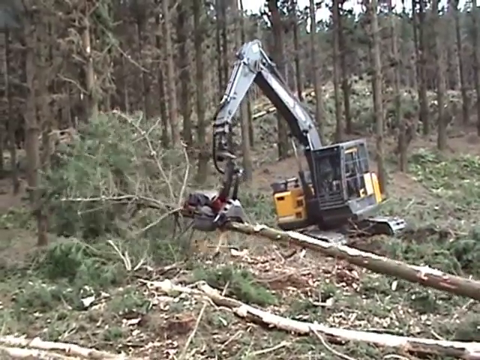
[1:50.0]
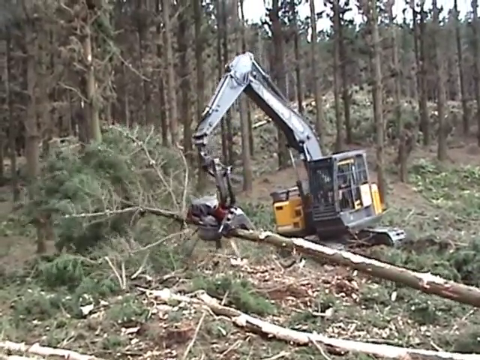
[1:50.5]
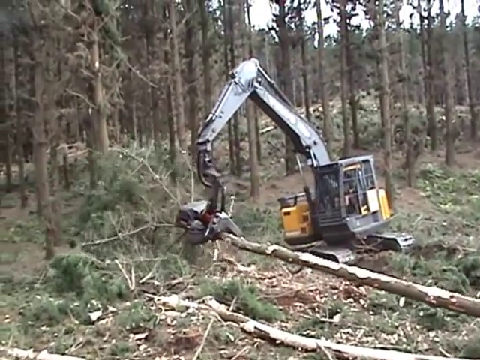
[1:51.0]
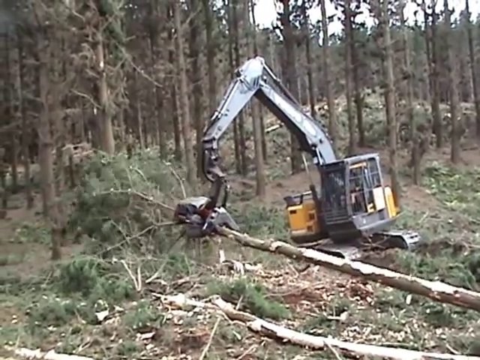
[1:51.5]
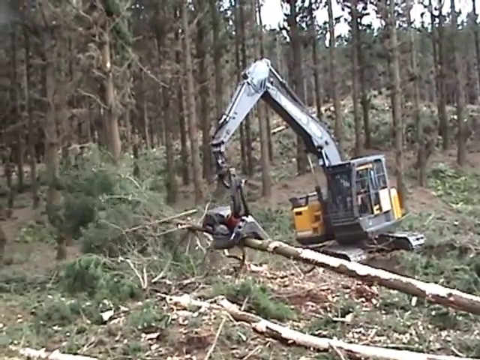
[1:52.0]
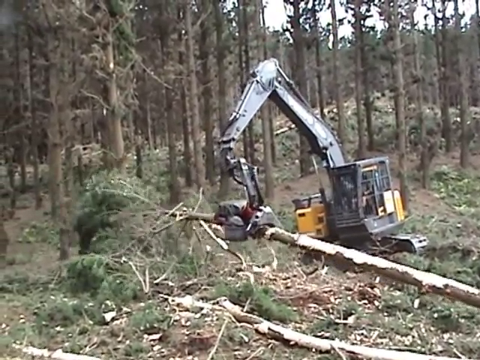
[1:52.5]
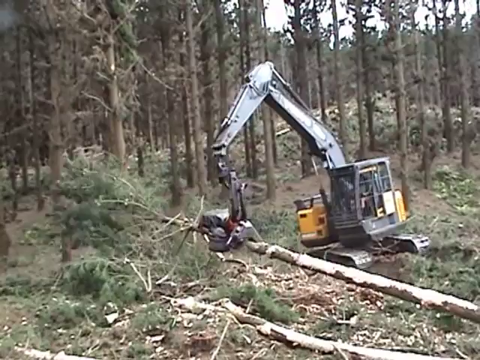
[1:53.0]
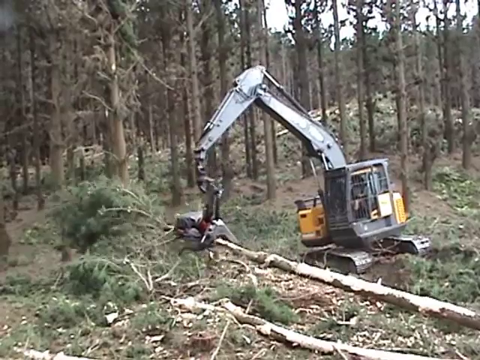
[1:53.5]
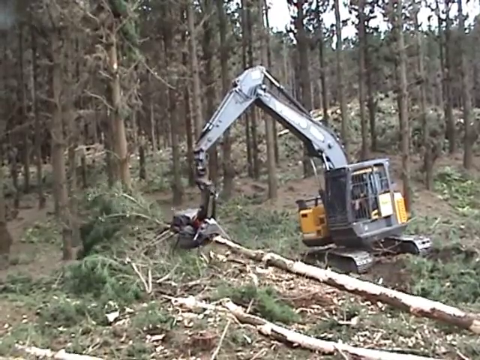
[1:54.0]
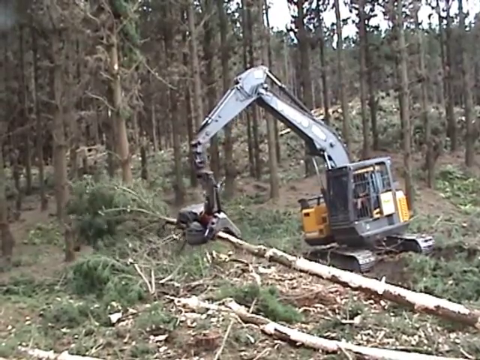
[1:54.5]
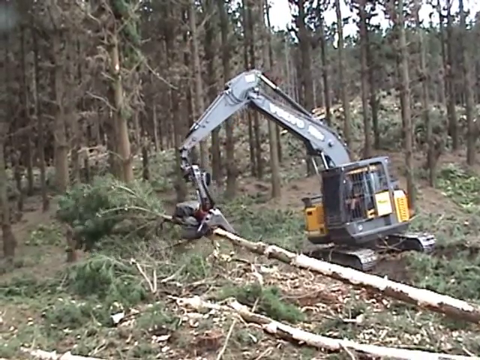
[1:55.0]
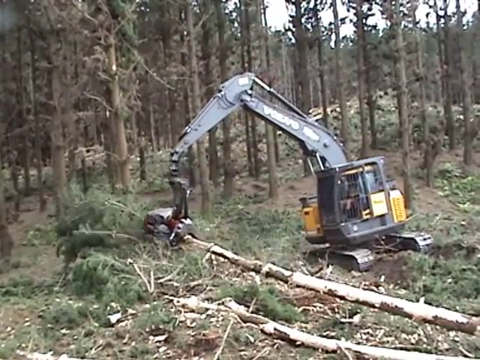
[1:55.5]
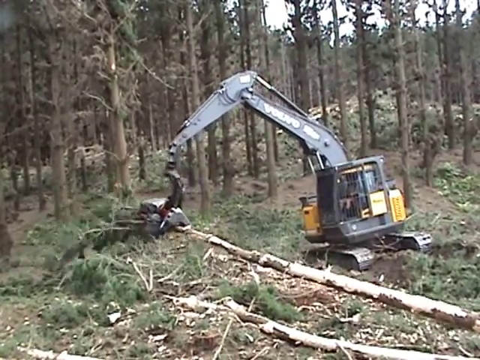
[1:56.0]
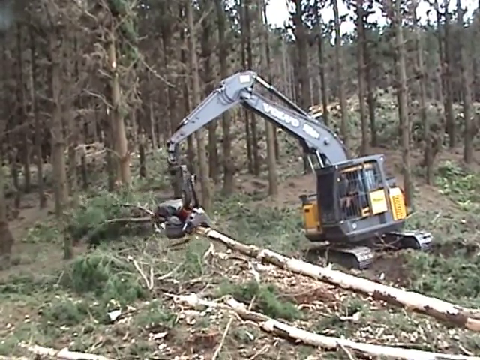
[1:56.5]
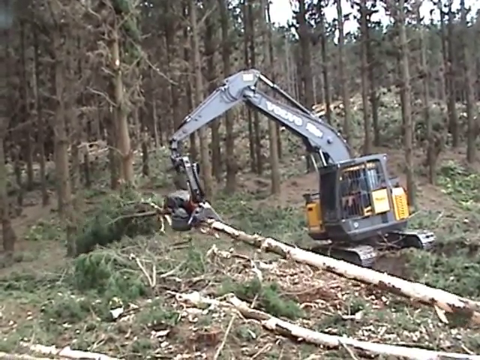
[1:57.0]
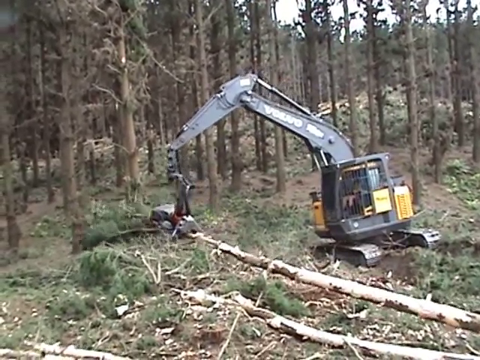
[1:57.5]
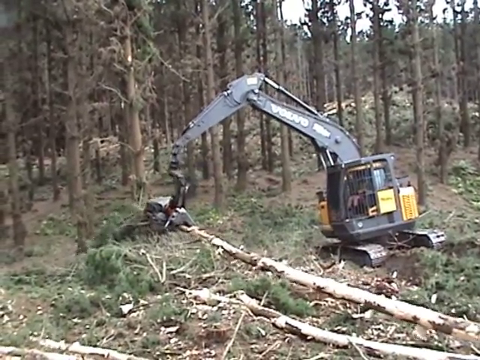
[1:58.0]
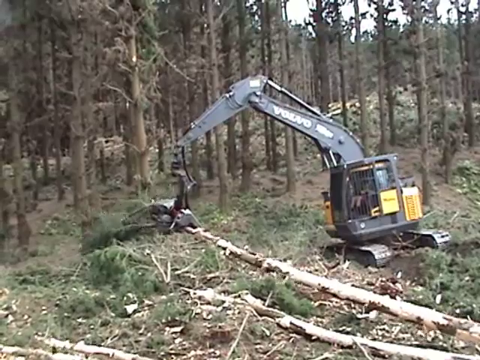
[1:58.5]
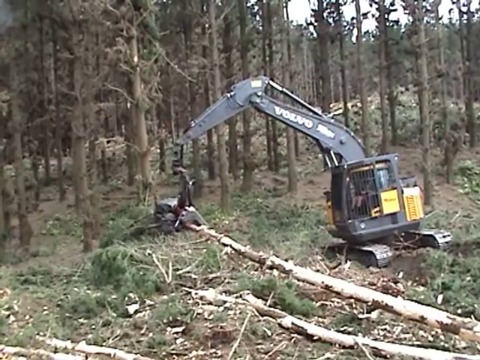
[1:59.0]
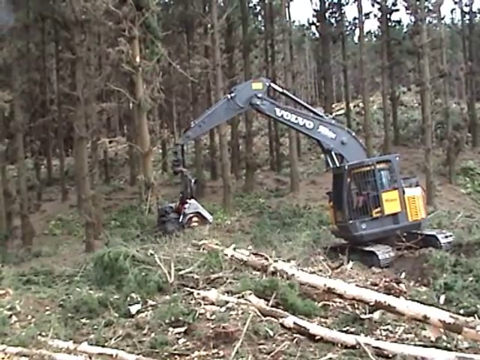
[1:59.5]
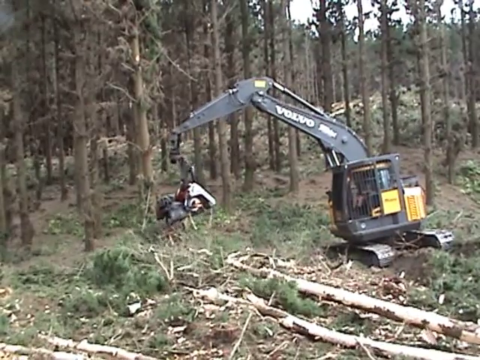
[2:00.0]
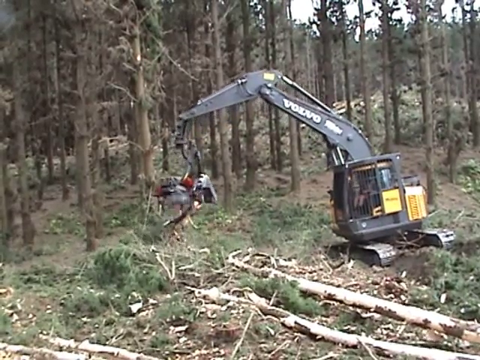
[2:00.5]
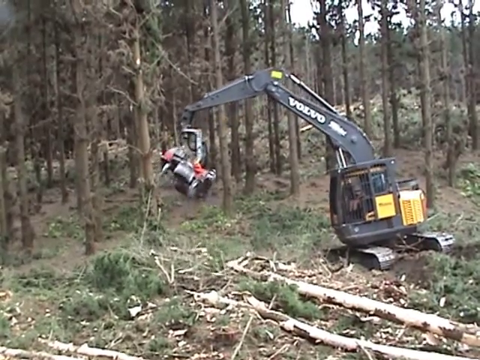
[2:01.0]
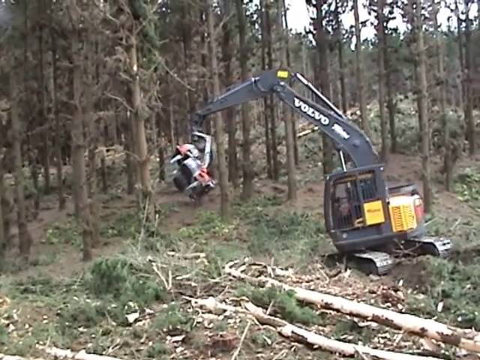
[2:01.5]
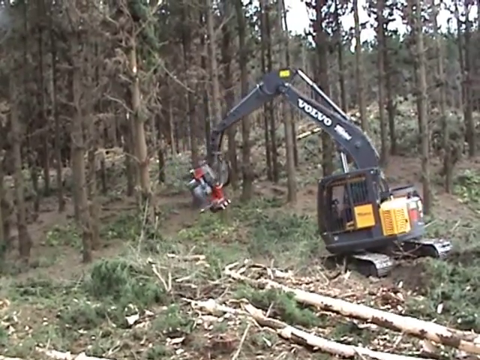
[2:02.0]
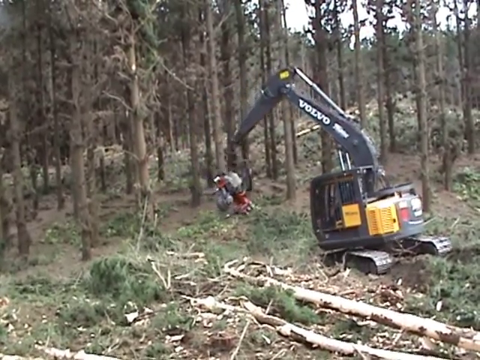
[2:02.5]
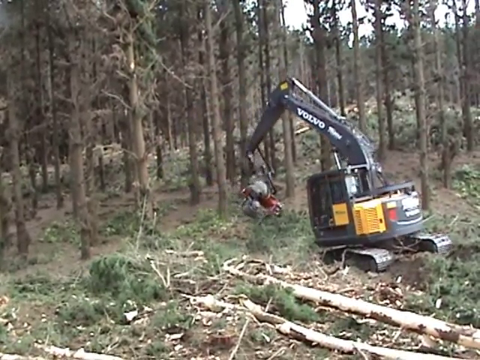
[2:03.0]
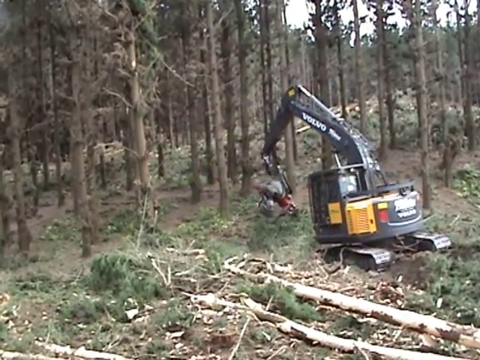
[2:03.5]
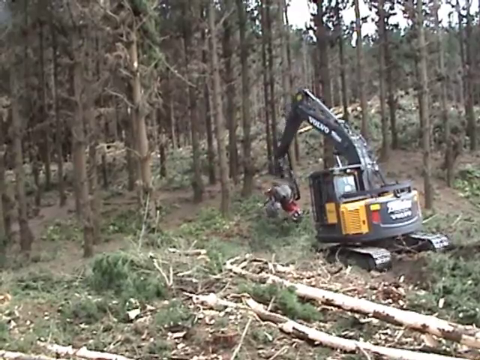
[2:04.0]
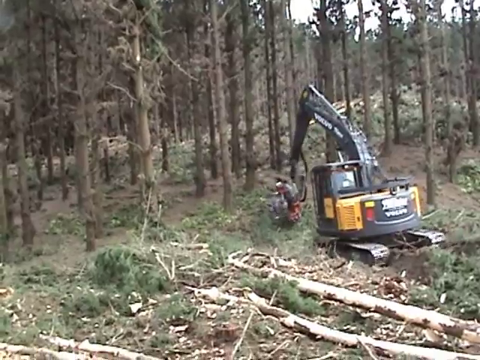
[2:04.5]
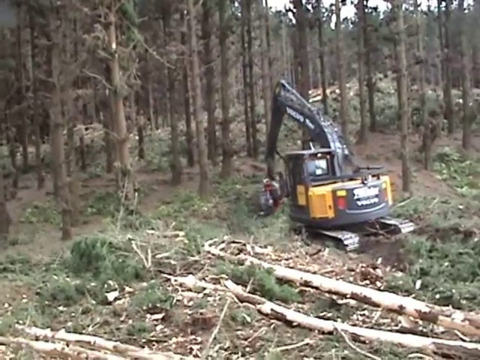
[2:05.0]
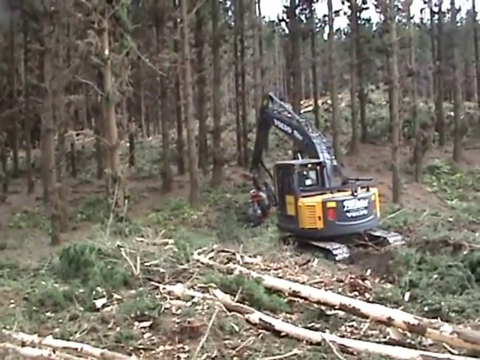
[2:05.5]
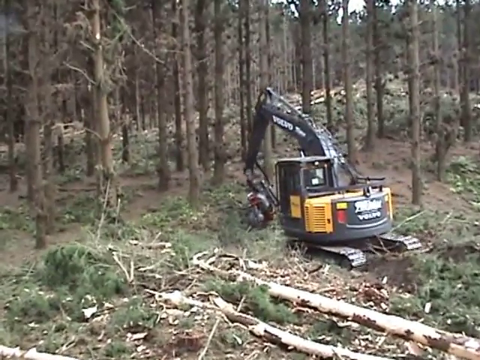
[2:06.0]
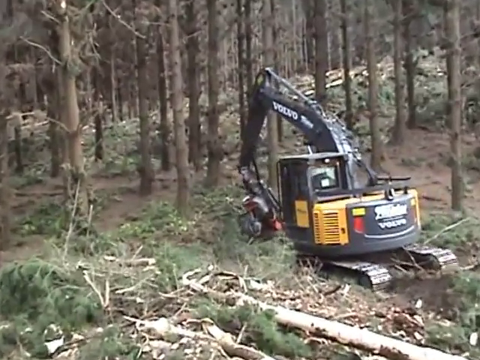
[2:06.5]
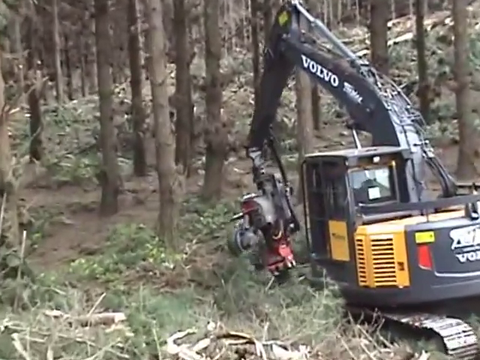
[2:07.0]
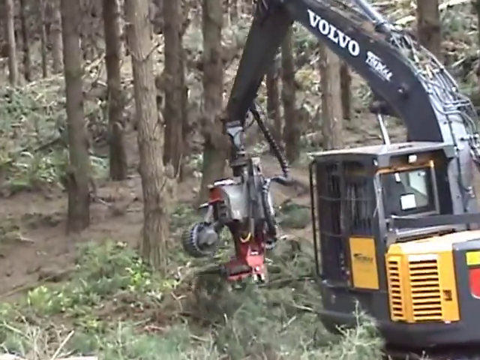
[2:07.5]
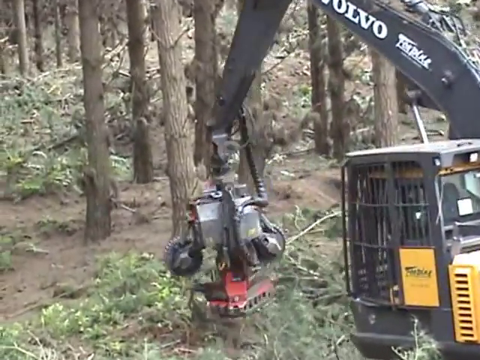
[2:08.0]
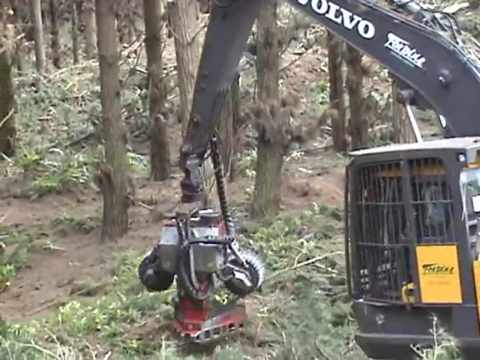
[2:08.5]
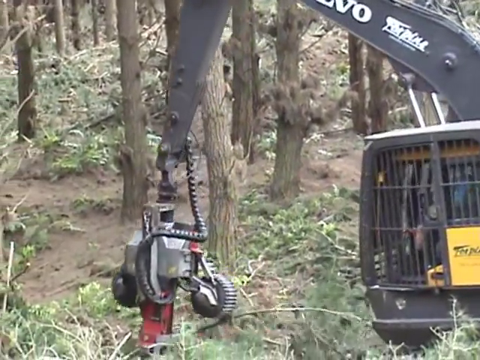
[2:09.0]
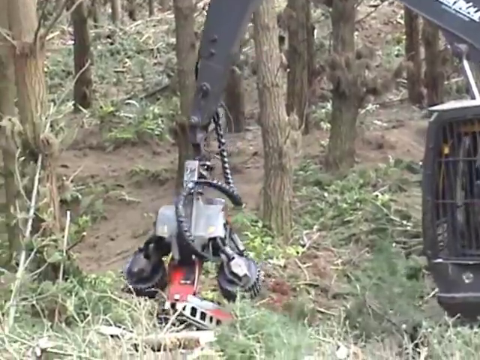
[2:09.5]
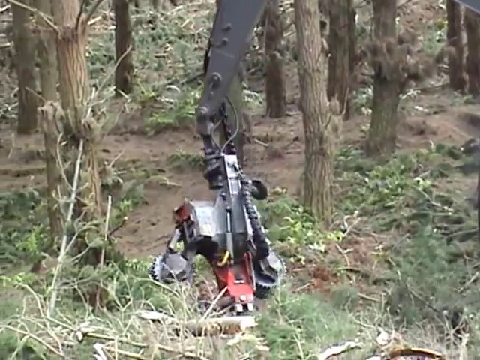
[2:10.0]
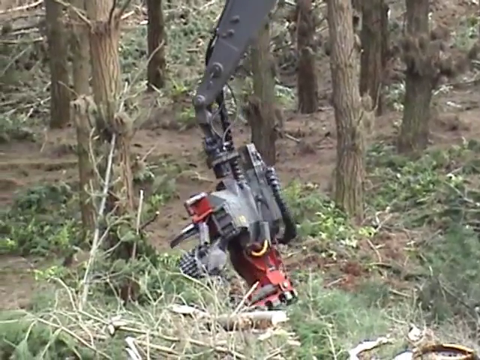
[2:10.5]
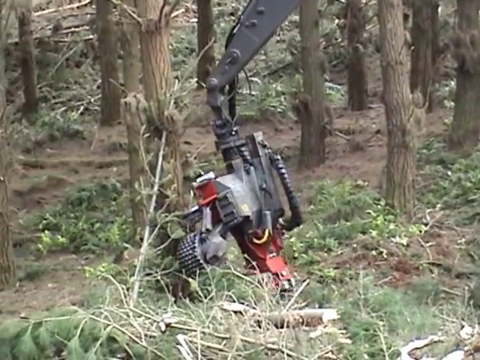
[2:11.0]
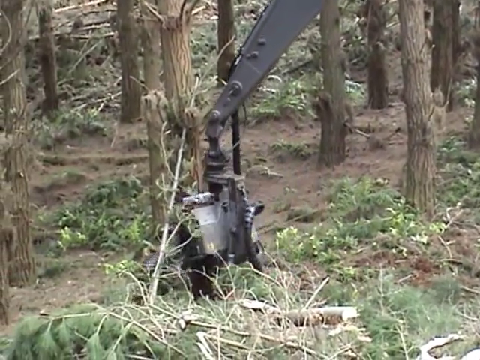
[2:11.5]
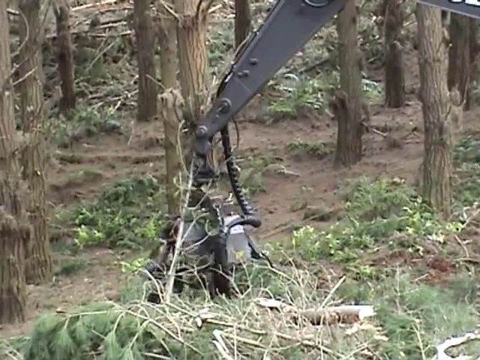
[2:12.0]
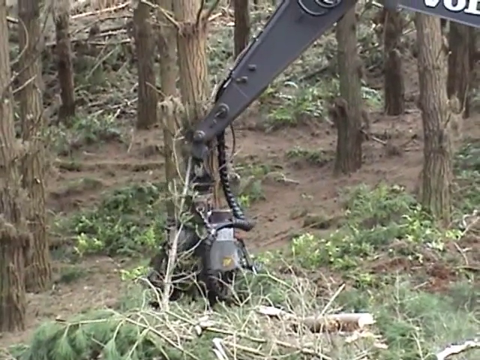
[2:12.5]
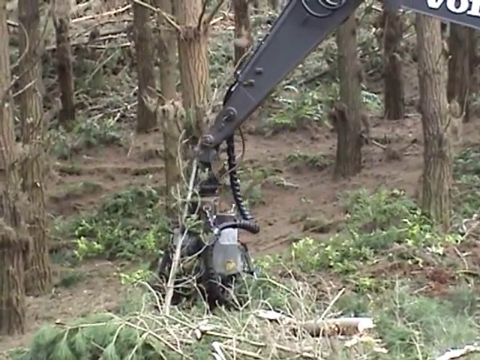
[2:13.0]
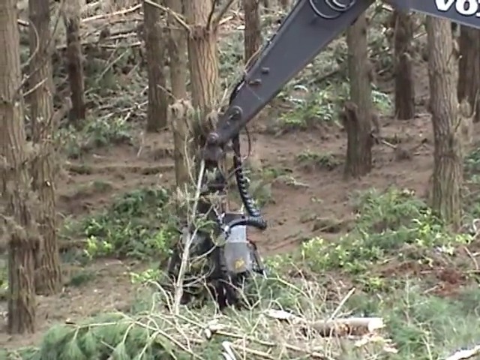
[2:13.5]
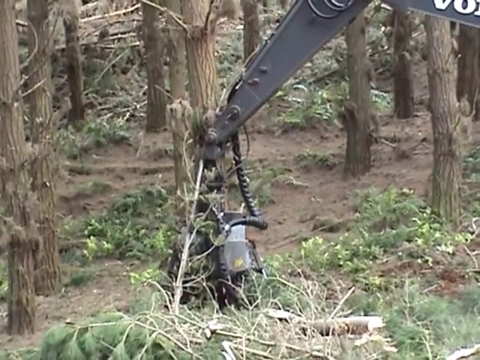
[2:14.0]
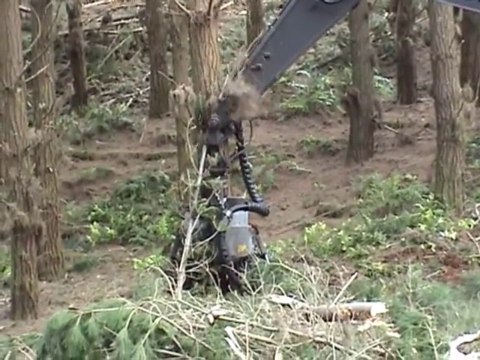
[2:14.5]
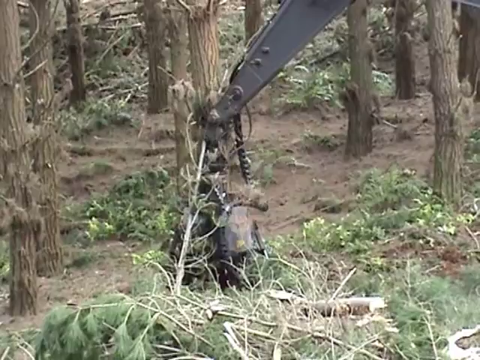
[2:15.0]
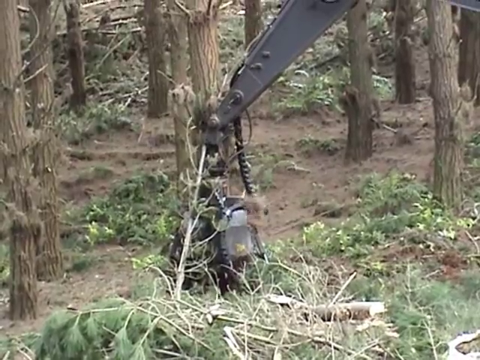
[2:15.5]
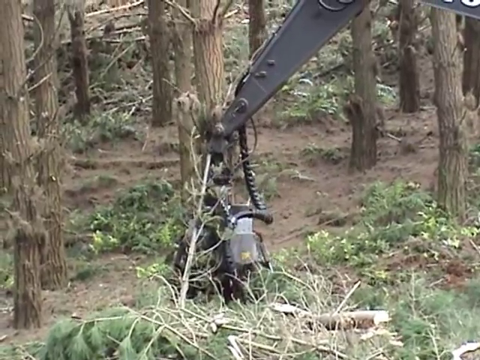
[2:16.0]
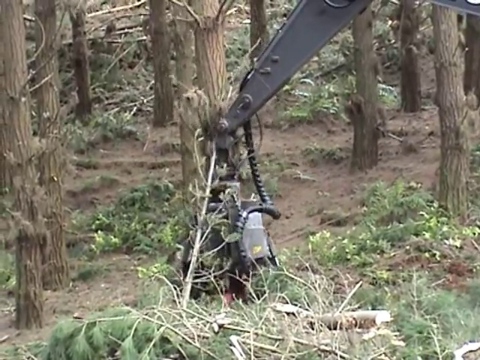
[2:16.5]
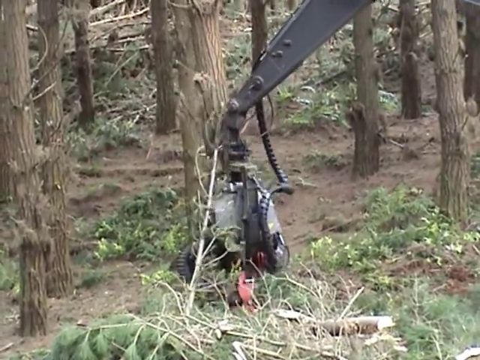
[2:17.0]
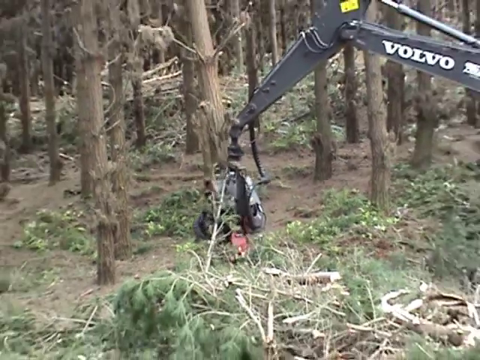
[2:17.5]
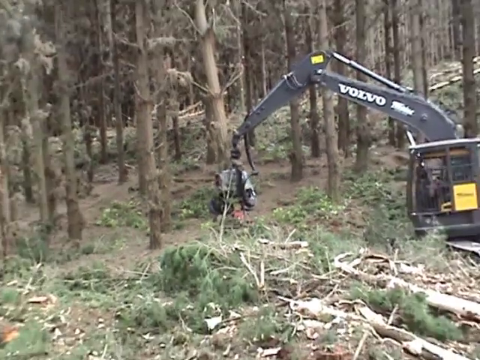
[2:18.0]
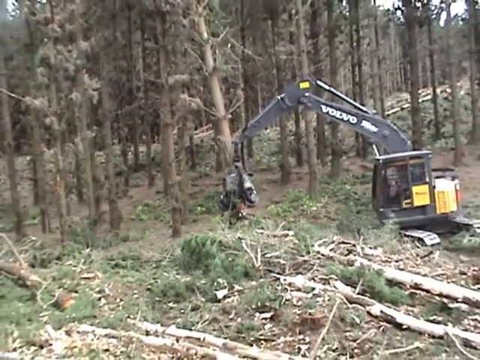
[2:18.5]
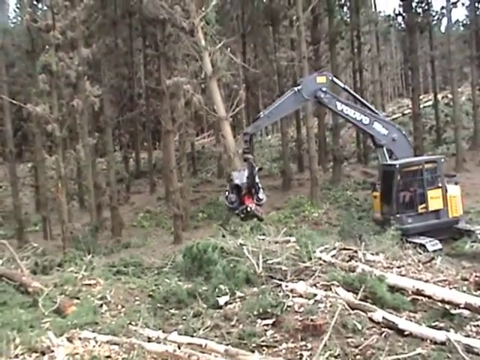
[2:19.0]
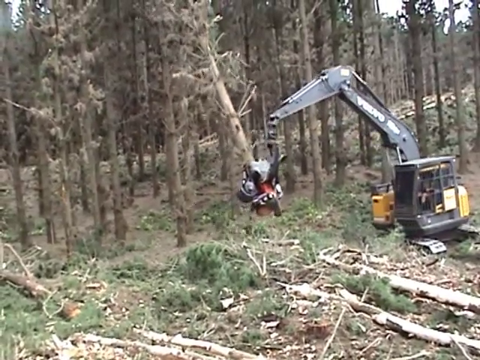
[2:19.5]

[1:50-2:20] The attachment continues slicing up the trunk of the second tree to the top, where the trunk becomes too narrow, then slices through the top, leaving just the cleaned-off trunk behind. A closer view of the equipment follows as it attaches to the base of a third tree and severs through the bottom, then starts lifting the tree toward the workspace where it has been cleaning the others. The way it moves on the arm looks really odd, not as if under ordinary rules of gravity. Much debris, including a lot of shaved branches, is left on the forest floor. Shaving the surface of the trunks partly strips the light brown outer bark and exposes the white interior wood, leaving a color contrast of bark and white wood.